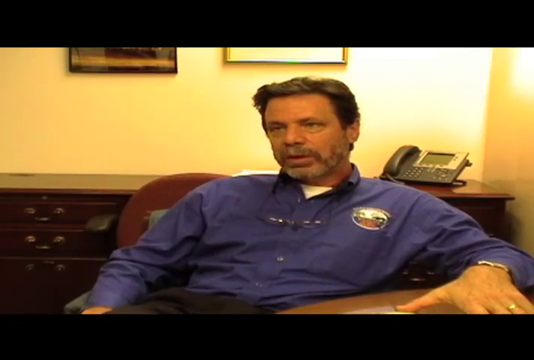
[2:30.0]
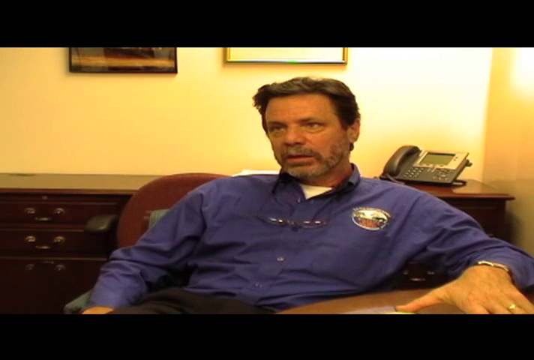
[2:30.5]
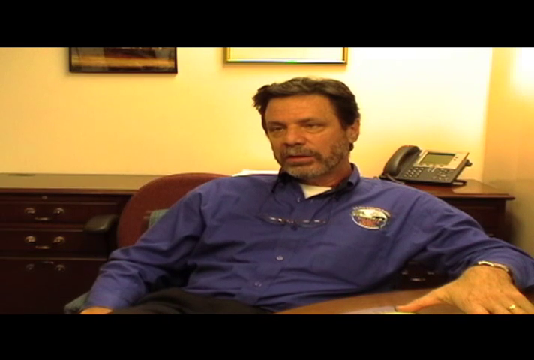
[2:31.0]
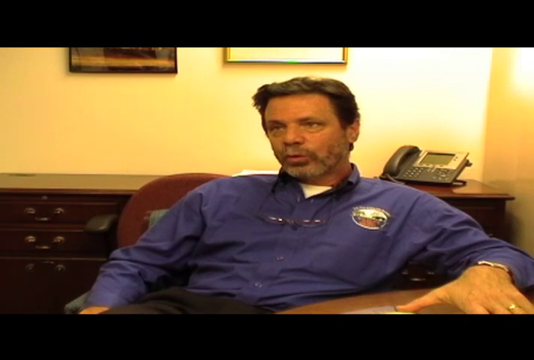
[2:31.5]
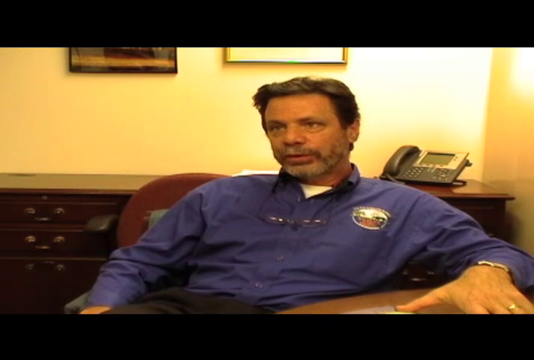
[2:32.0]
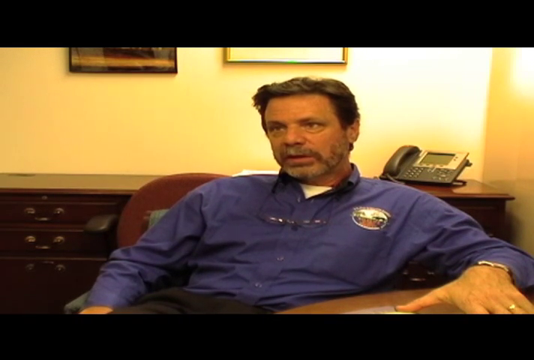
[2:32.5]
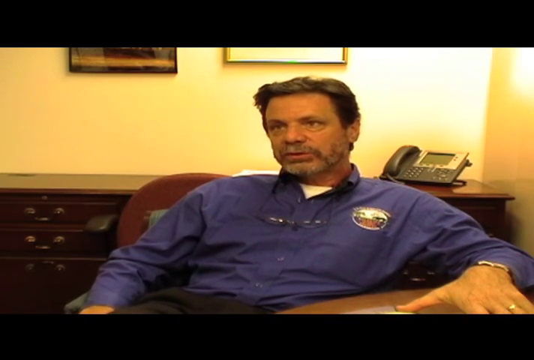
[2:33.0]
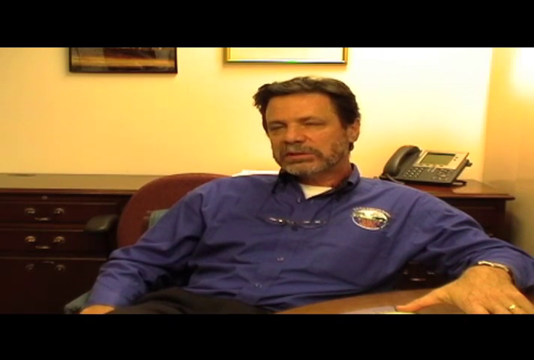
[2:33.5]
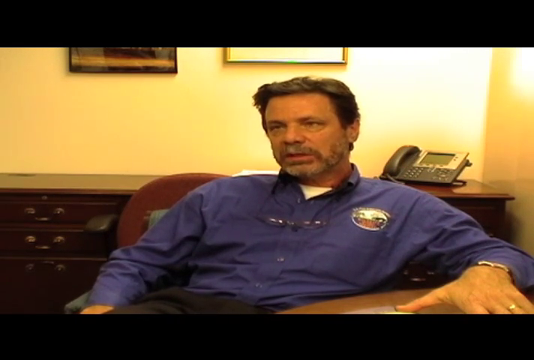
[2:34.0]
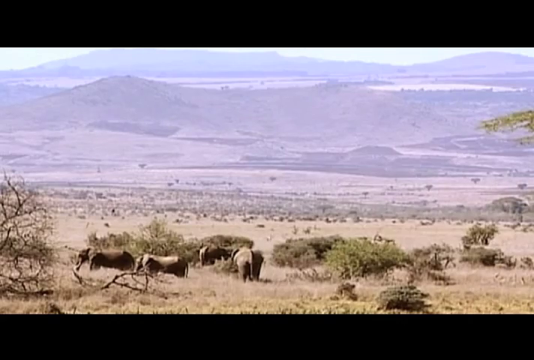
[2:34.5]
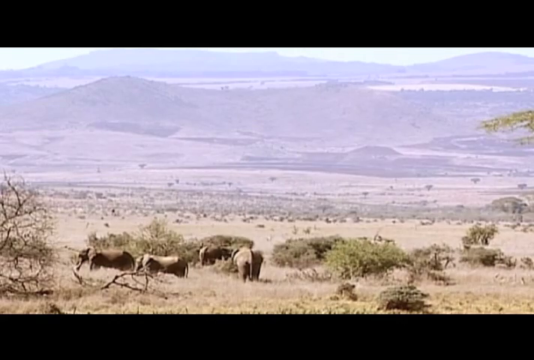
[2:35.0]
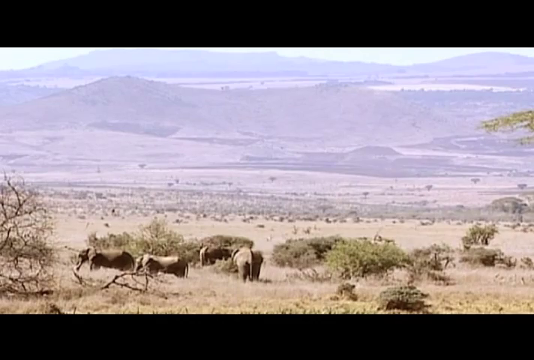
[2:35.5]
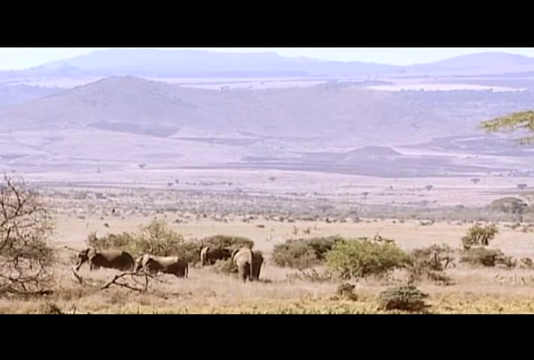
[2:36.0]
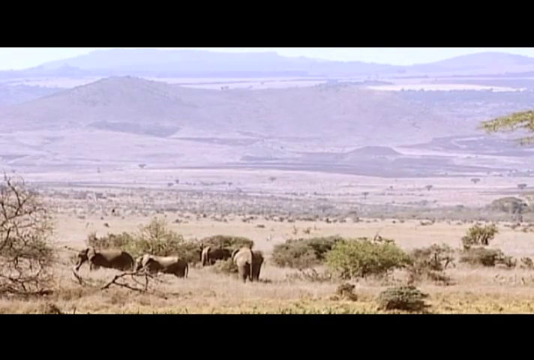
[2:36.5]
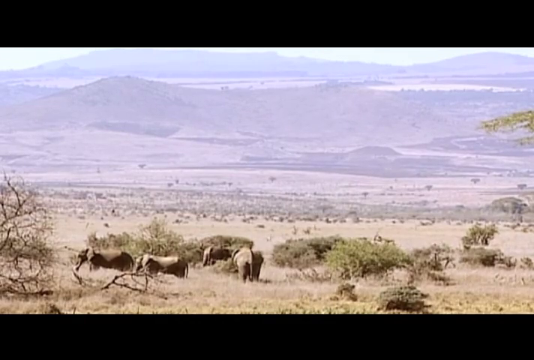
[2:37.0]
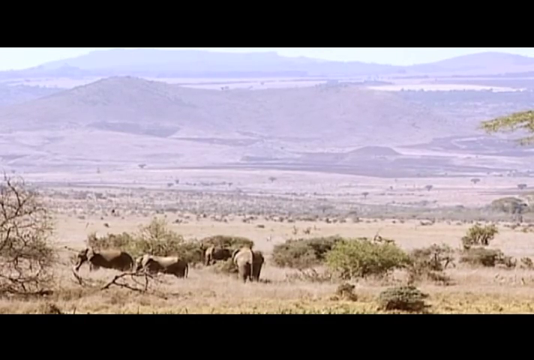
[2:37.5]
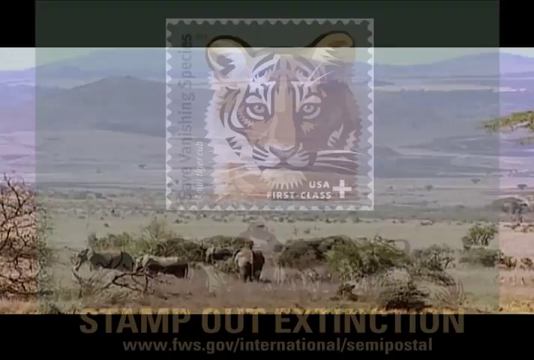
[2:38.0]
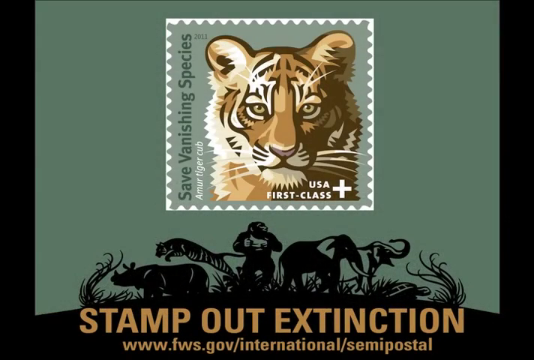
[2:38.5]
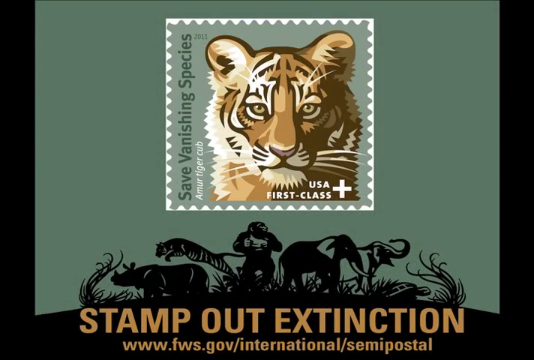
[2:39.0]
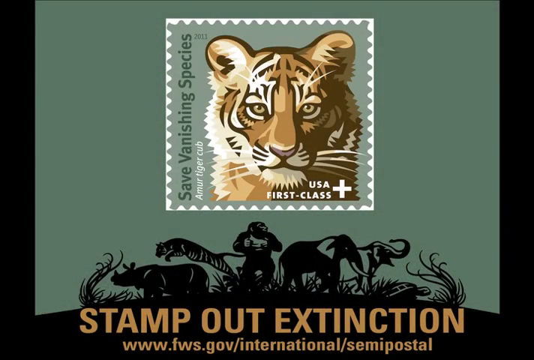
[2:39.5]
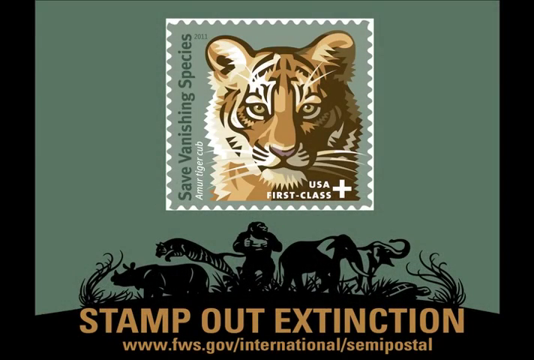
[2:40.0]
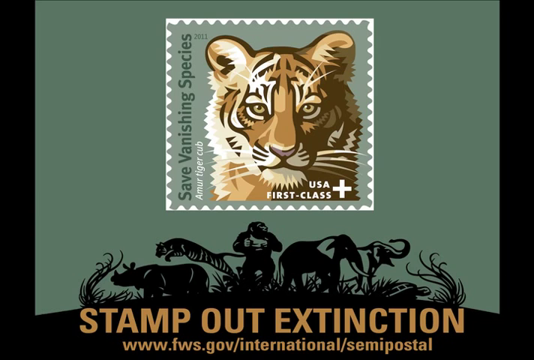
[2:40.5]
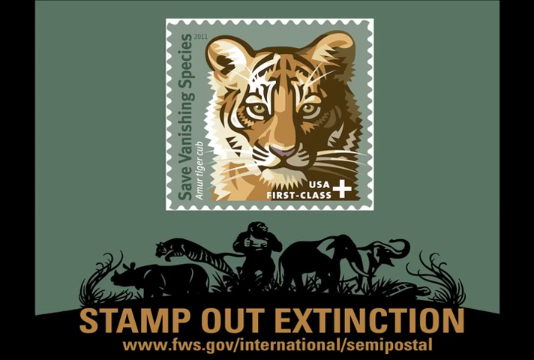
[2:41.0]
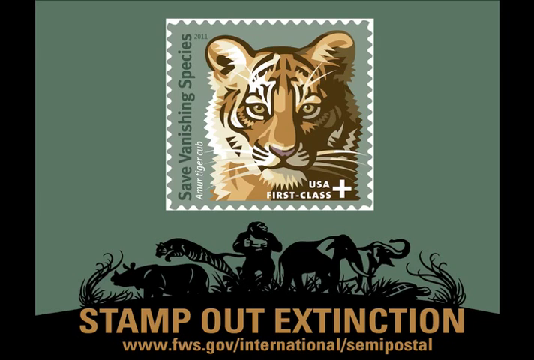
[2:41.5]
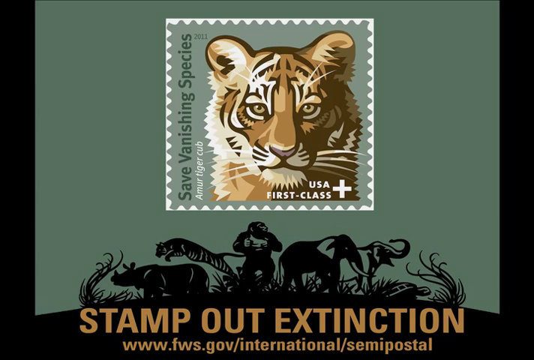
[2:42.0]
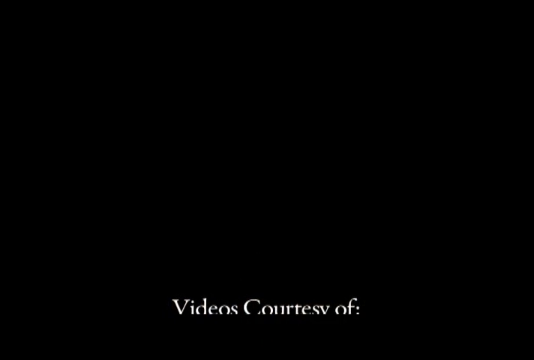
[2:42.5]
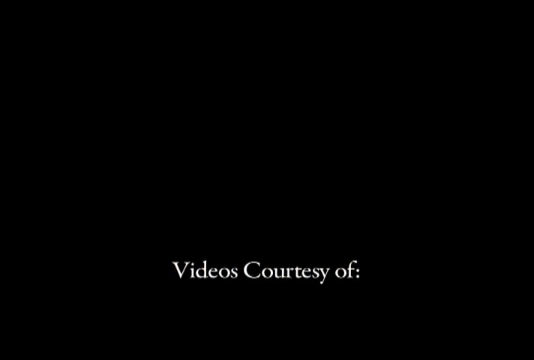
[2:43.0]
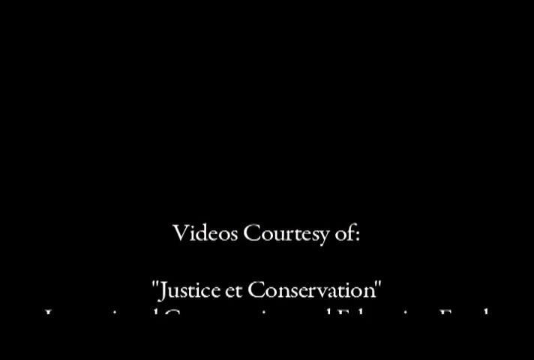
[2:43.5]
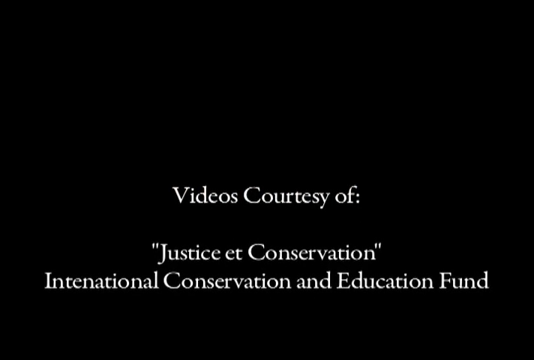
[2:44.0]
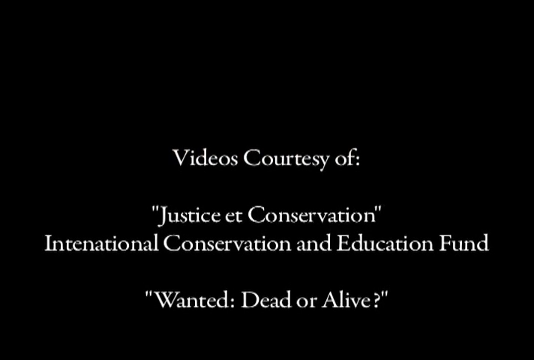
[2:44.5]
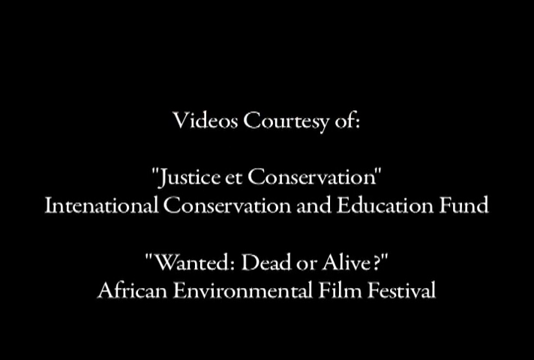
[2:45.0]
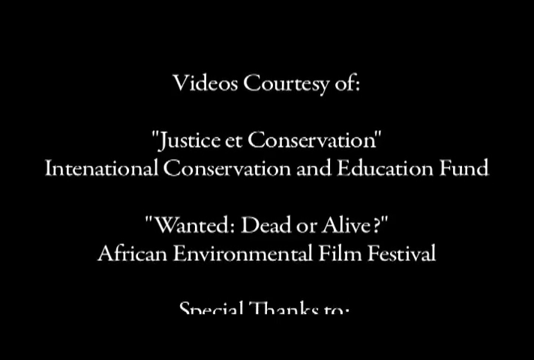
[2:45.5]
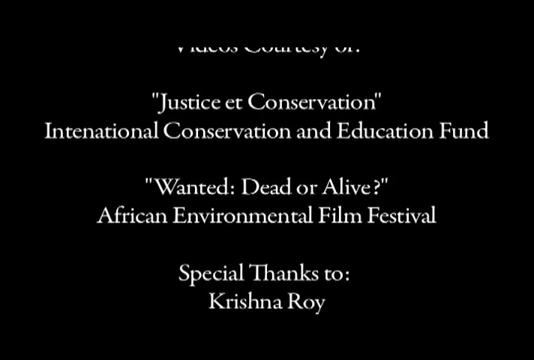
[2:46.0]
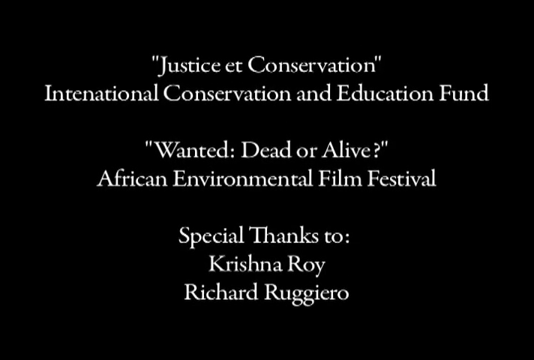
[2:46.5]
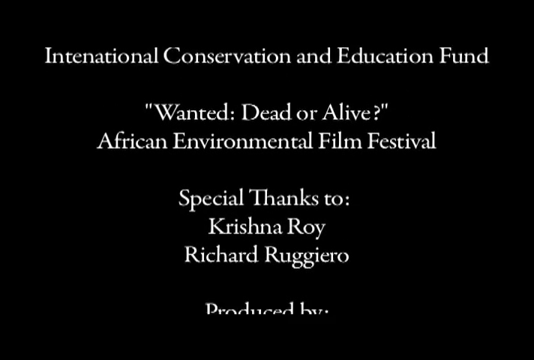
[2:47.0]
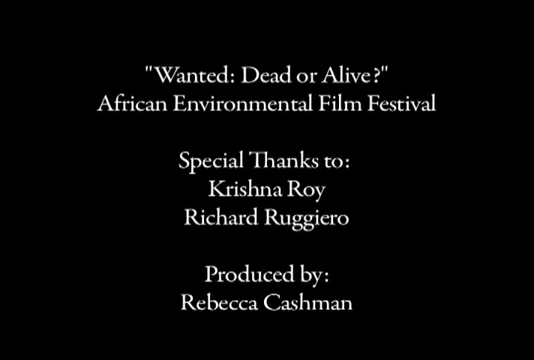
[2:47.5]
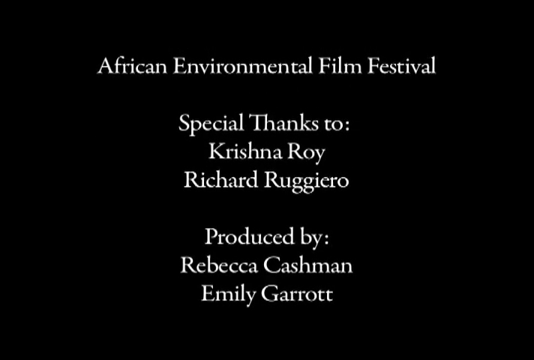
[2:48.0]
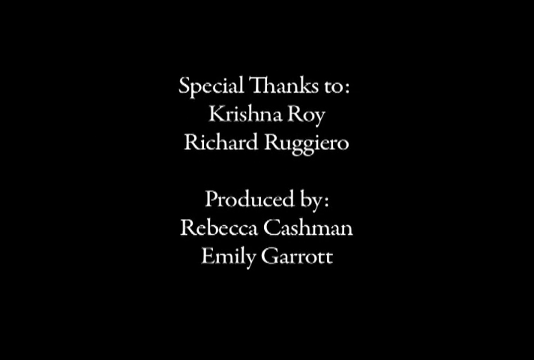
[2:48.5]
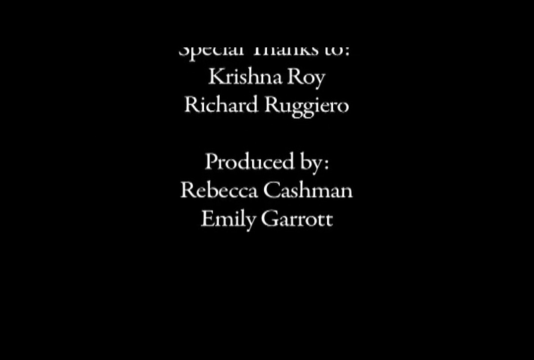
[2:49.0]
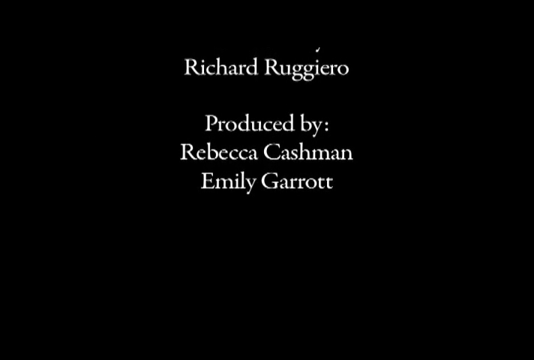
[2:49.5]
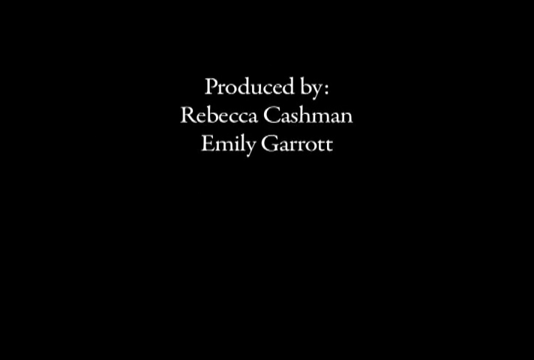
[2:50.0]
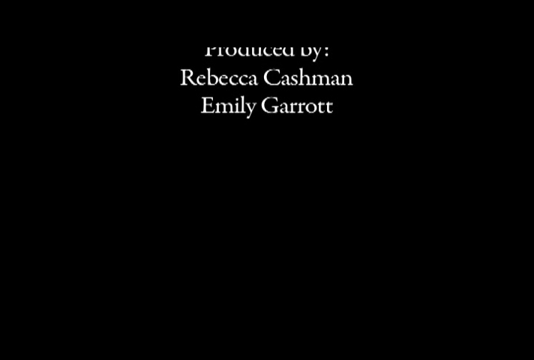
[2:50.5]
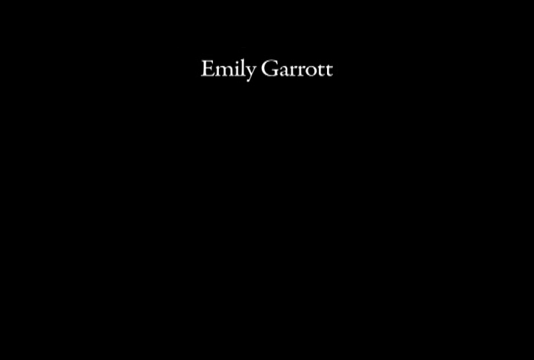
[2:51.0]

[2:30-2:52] The man in the office is speaking and raises both eyebrows, being very expressive. The video moves to a wide-angle shot of miles of open savanna and lower mountain ranges, with elephants in the very foreground of the frame. Farther behind them are lots of animals, though it is unclear whether they are elephants or another type of herd animal. It looks to be the same frame the video opened with. Next comes a teal green background with the words "STAMP OUT EXTINCTION" at the bottom in brown, and a stamp like a USA first class postage stamp with a drawing of a tiger on it; on the left side of the stamp it says "SAVE VANISHING SPECIES." The screen then goes black with the credits scrolling upward in white text.